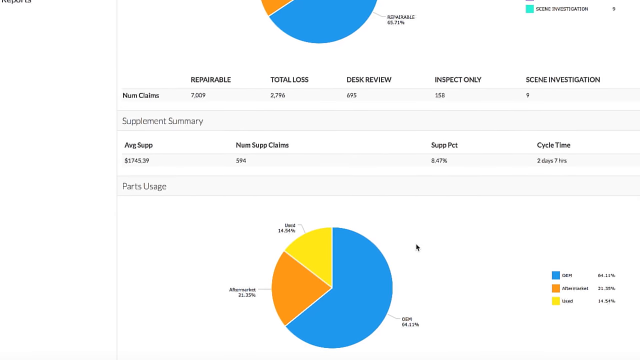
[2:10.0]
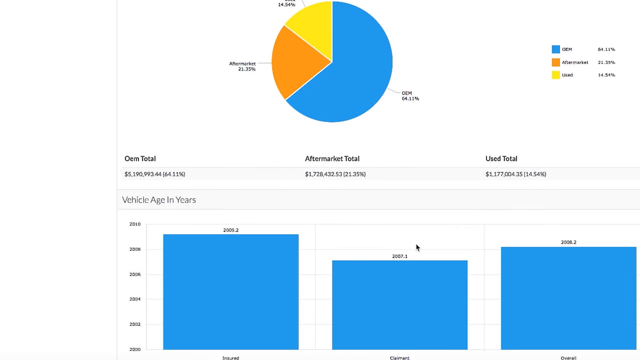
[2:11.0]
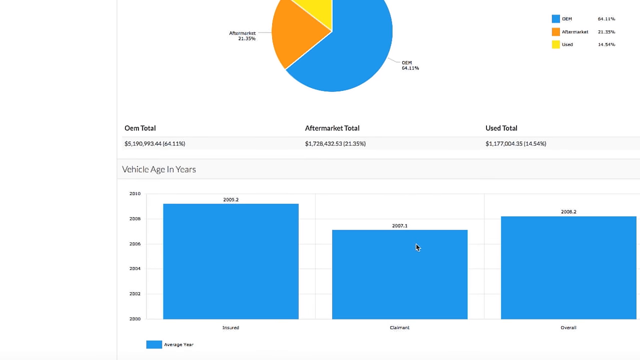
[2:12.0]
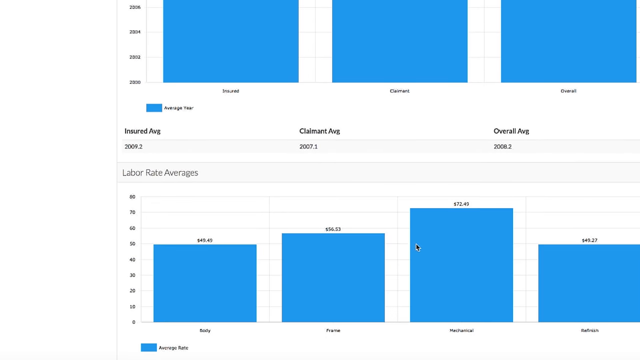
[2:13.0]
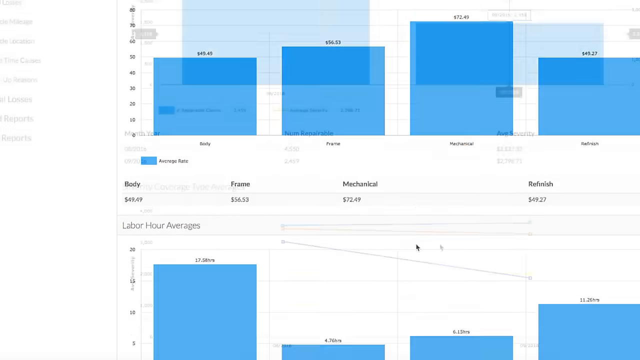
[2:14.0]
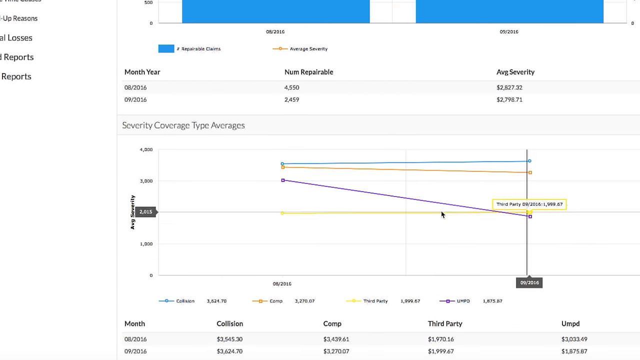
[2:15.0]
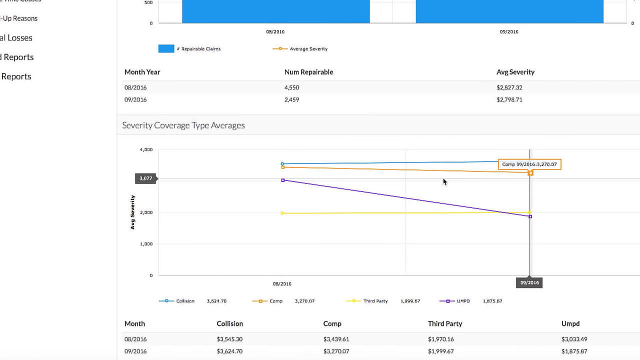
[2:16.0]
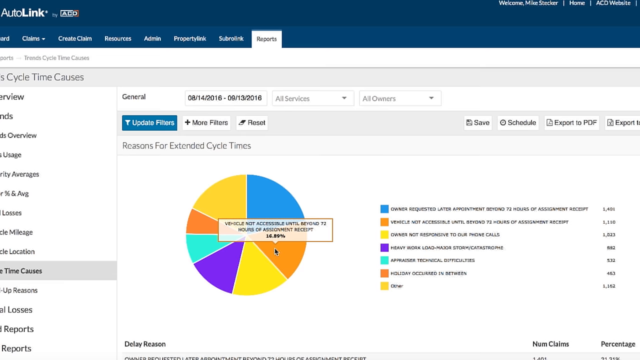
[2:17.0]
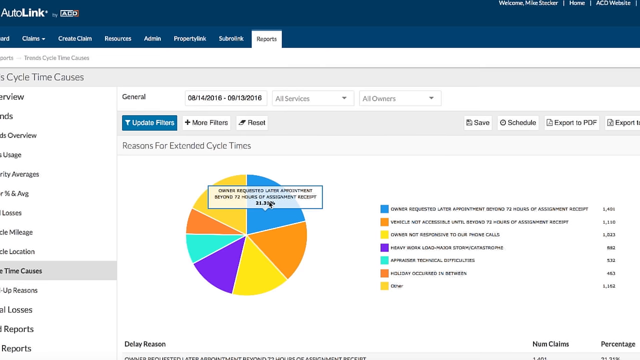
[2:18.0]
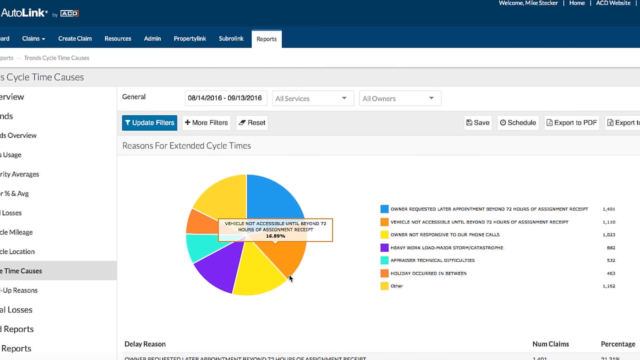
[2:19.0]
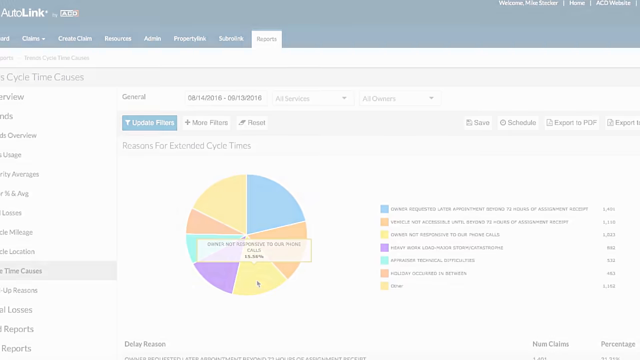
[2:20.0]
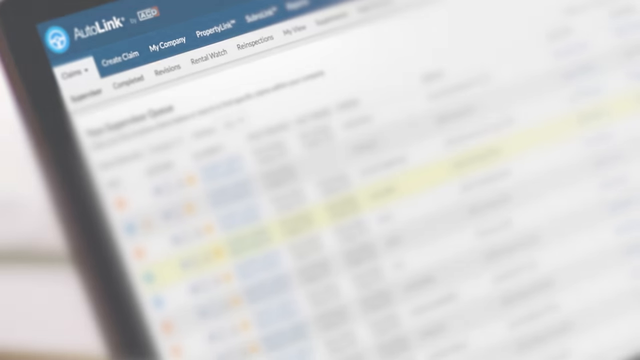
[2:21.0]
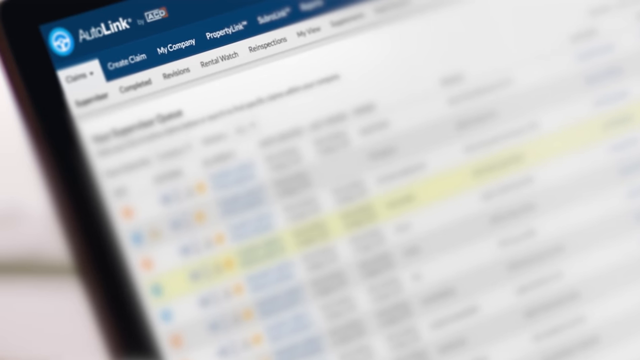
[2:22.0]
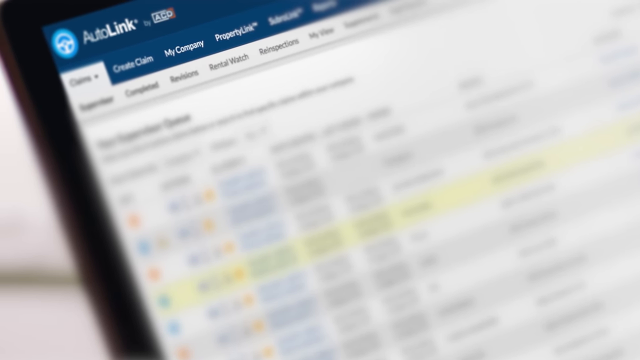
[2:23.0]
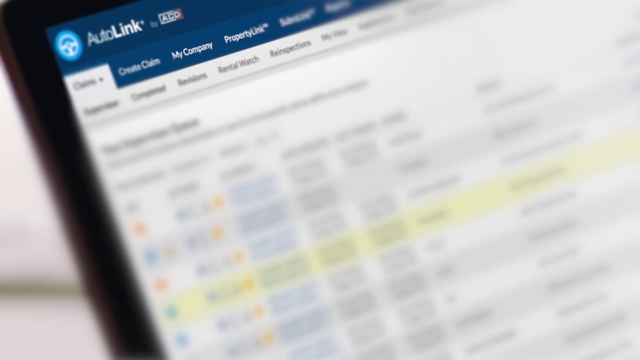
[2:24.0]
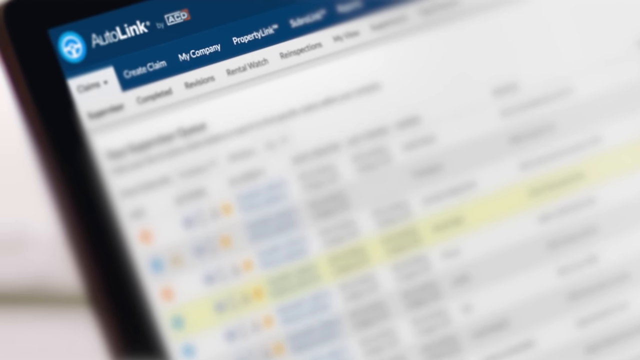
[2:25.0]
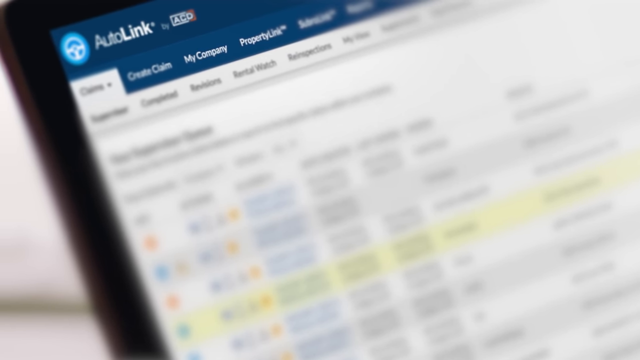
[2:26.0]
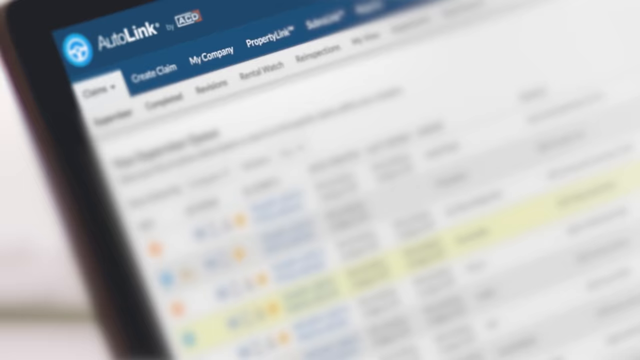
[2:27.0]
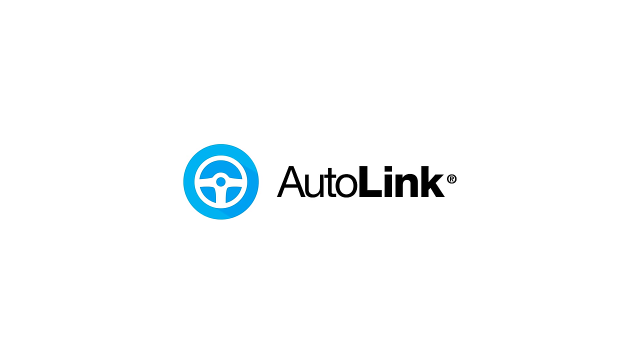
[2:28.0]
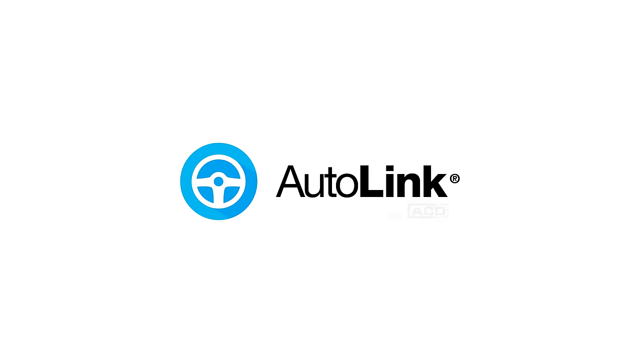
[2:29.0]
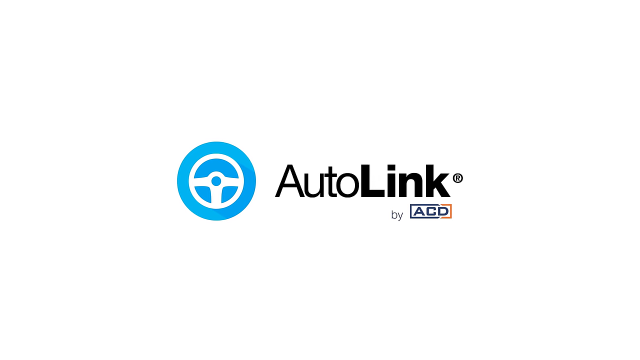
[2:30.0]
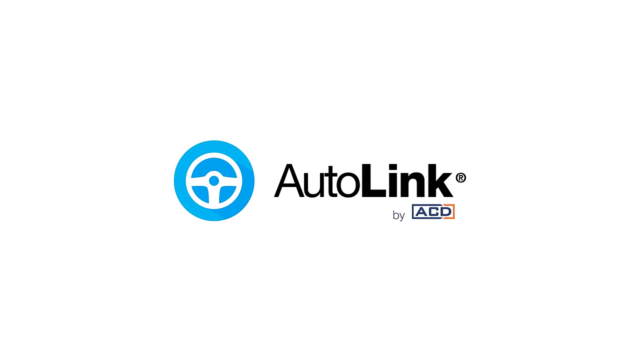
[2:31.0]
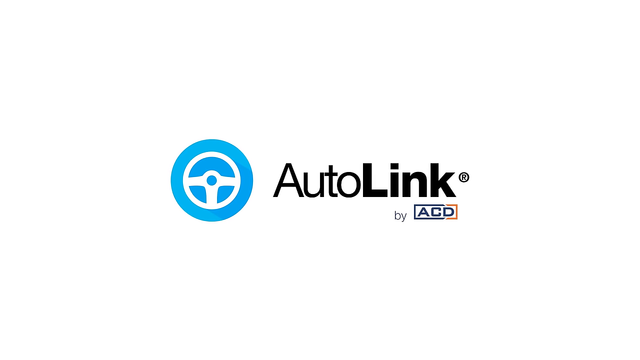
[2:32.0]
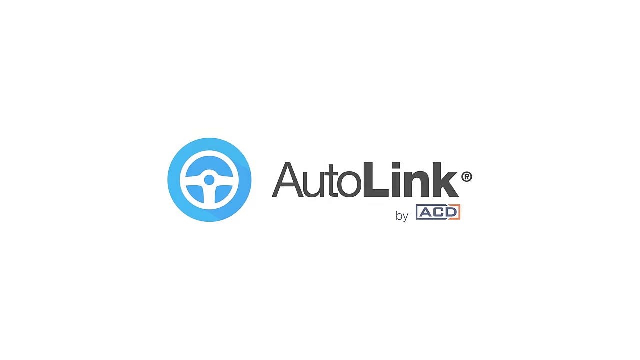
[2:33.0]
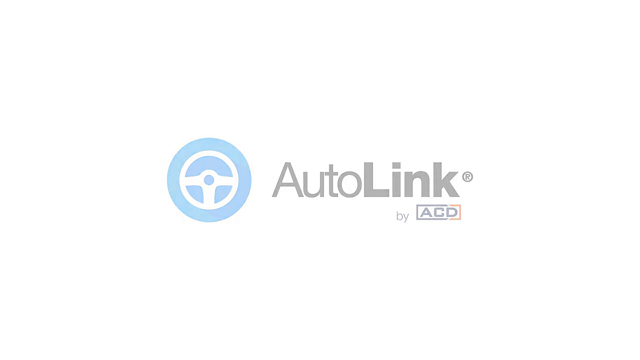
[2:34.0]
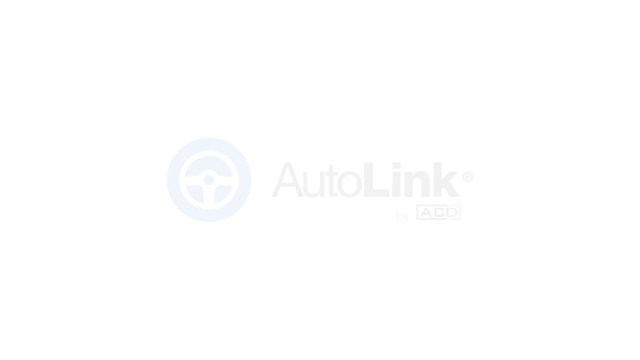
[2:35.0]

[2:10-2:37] The page scrolls down further to the second pie chart, which has three segments: a blue segment marked OEM at 64.11%, aftermarket at 22.25%, and used at 14.54%. Below that are amounts of money: an OEM total of $5,190,993.44, an aftermarket total of $1,728,432.53, and a used total of one million one hundred seventy-four dollars and twenty-five cents. Below that are two bar charts showing the vehicle's age in years, with an insured average of 2009.2, a claimant average of 2007.1, and an overall average of 2008.2. Below that is another bar chart for labor rate averages. It then fades to another series of charts: a line chart showing severity coverage type averages, highlighting the four fields in it, and then a pie chart of reasons for extended cycle times.